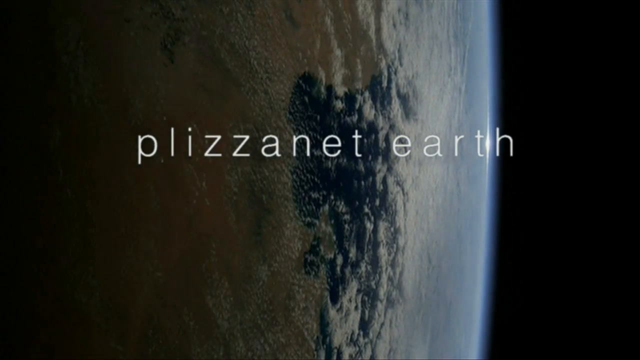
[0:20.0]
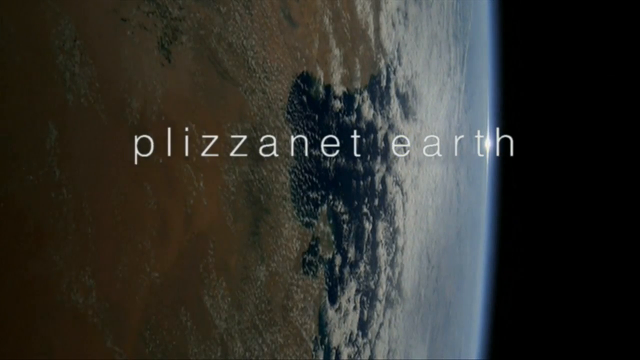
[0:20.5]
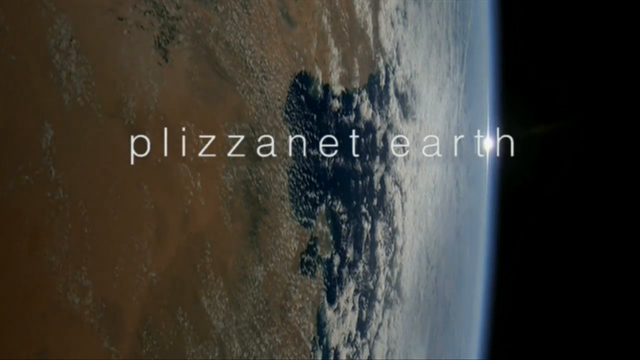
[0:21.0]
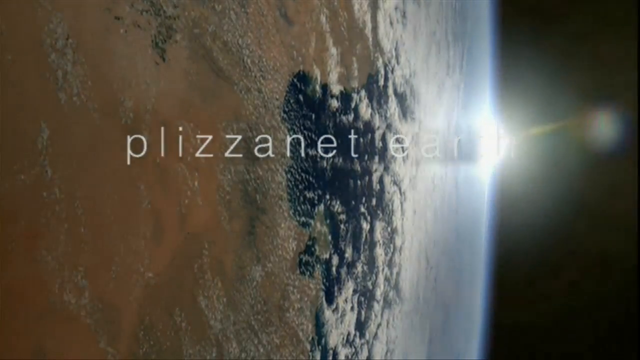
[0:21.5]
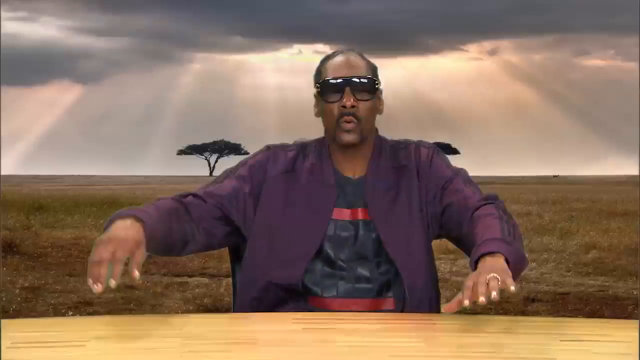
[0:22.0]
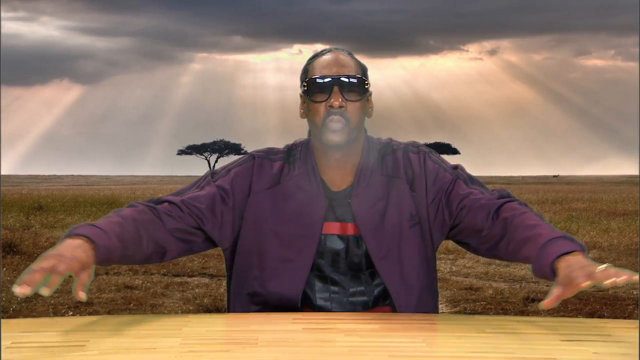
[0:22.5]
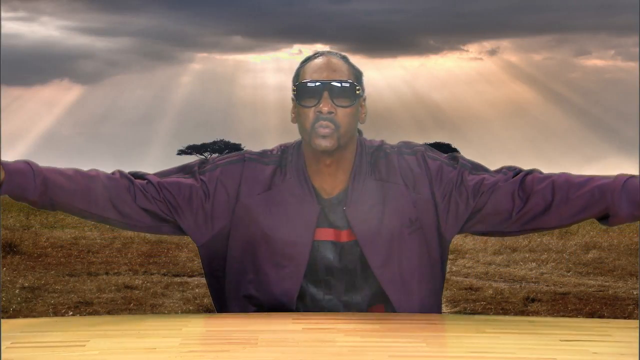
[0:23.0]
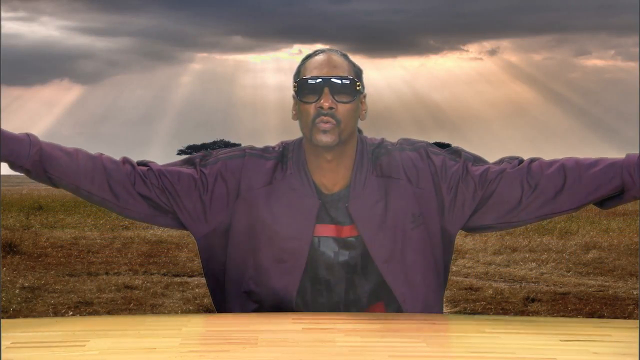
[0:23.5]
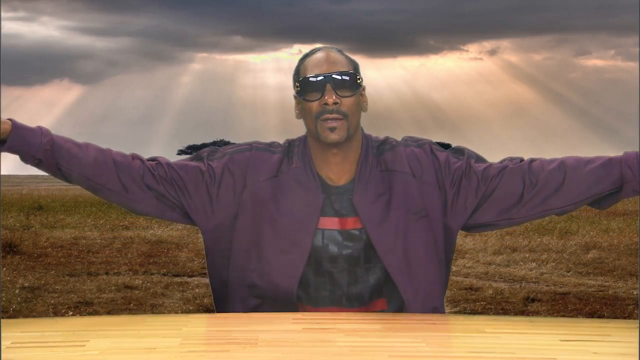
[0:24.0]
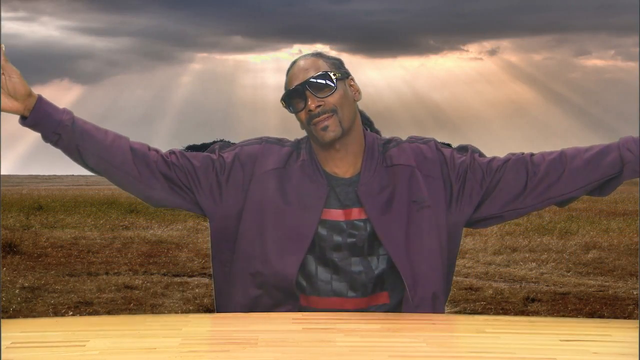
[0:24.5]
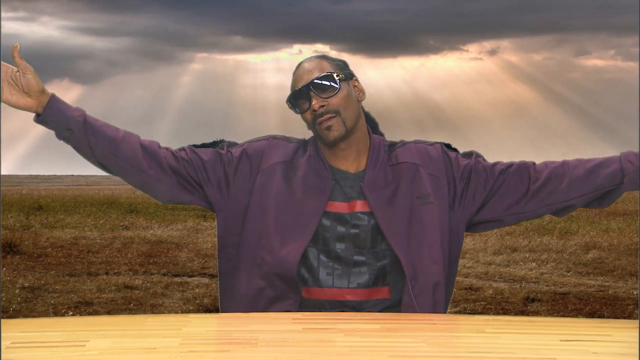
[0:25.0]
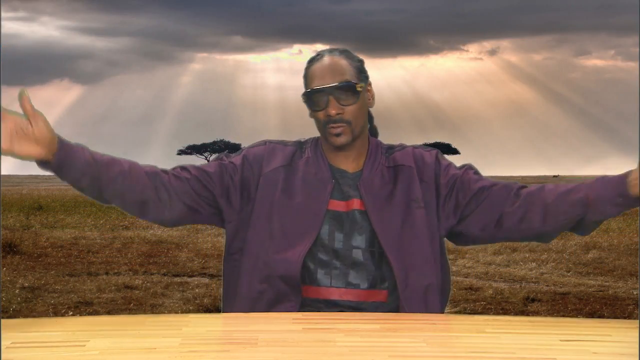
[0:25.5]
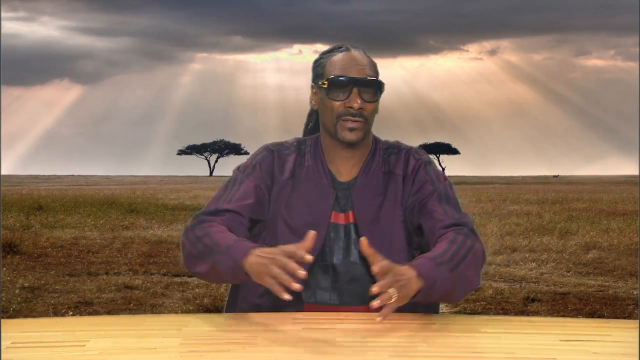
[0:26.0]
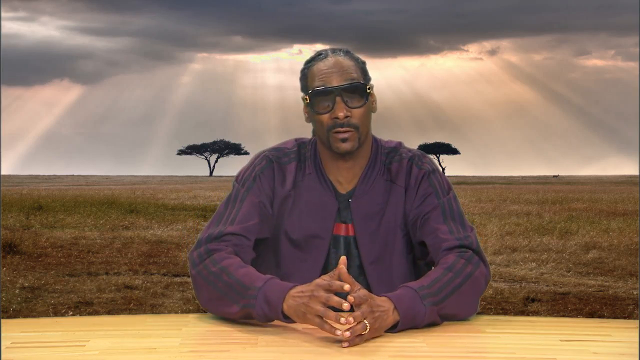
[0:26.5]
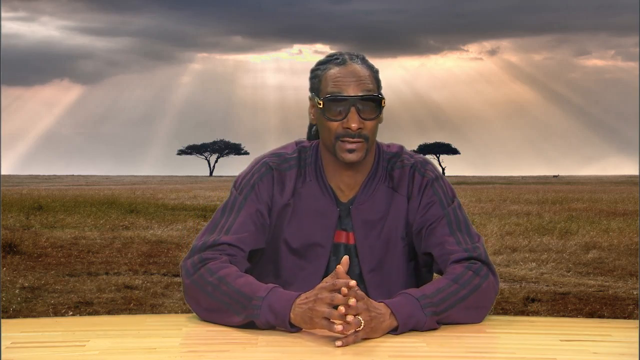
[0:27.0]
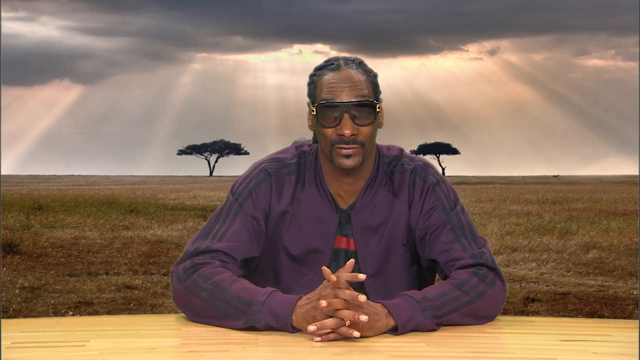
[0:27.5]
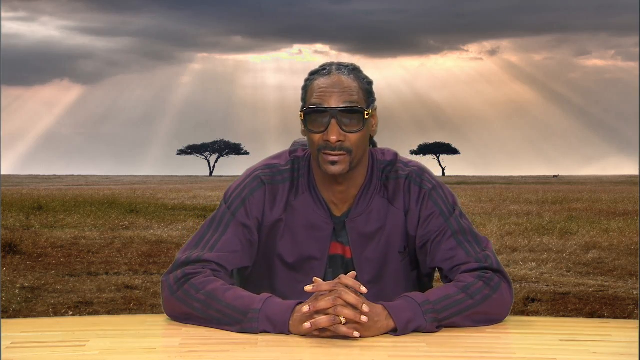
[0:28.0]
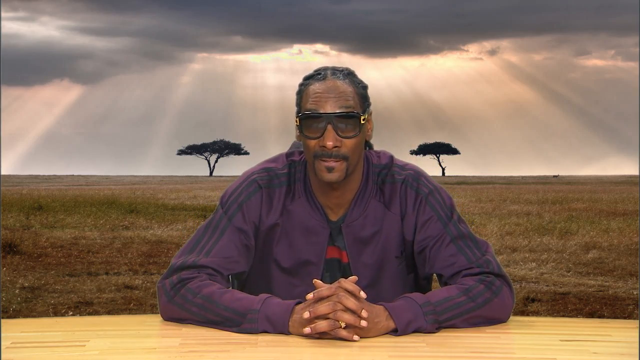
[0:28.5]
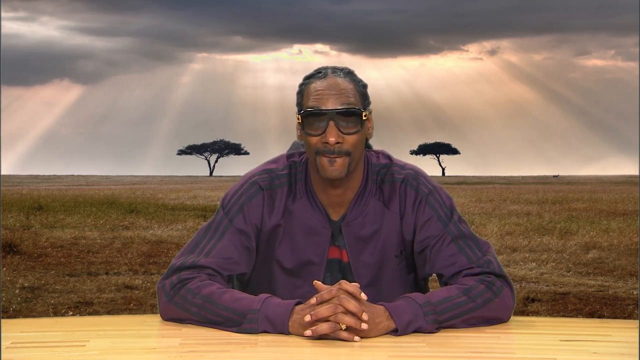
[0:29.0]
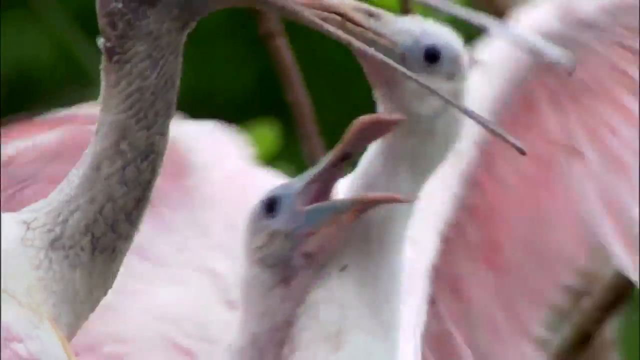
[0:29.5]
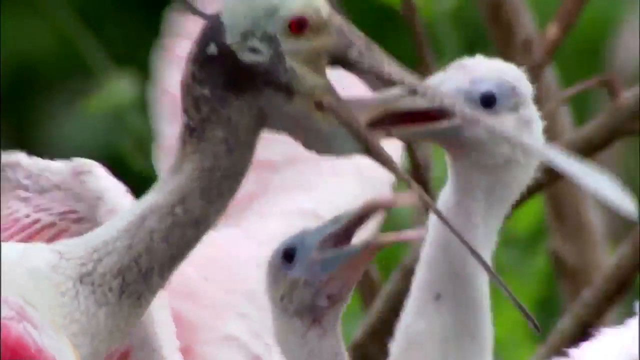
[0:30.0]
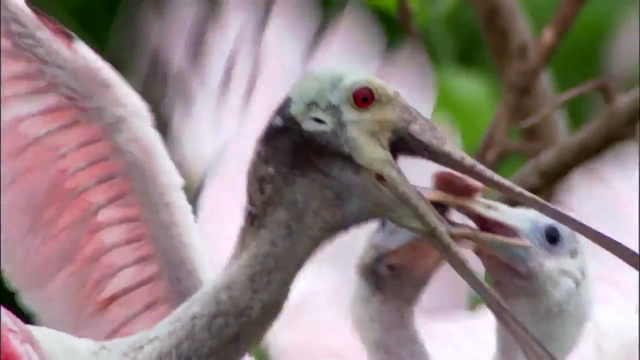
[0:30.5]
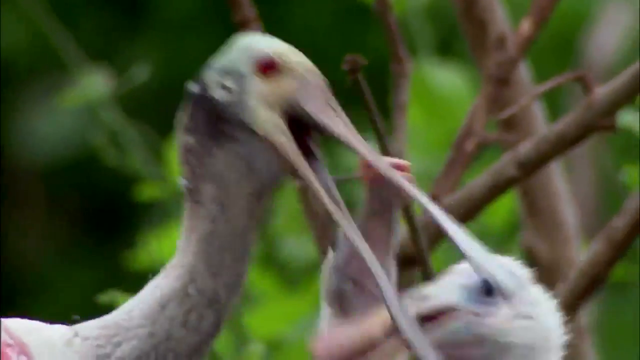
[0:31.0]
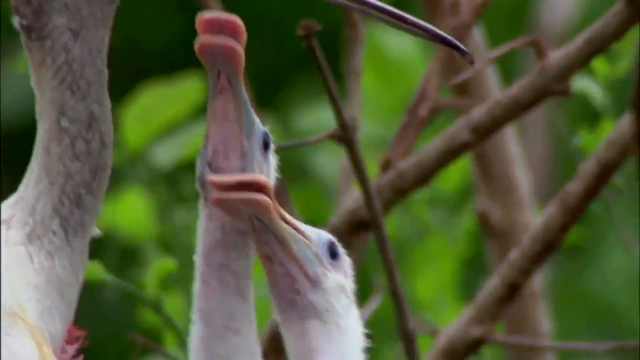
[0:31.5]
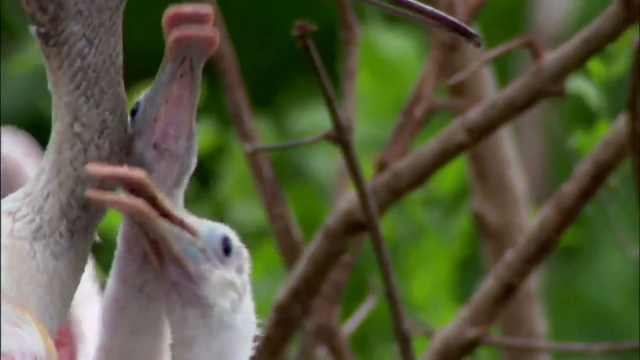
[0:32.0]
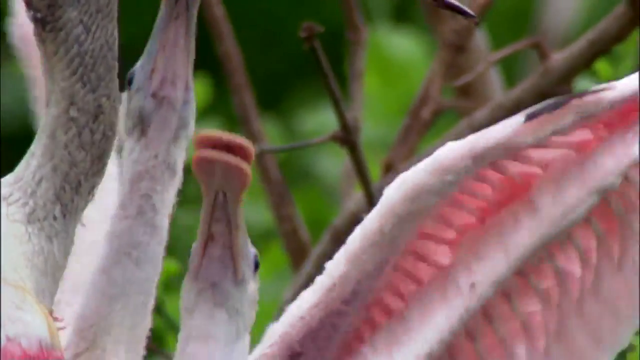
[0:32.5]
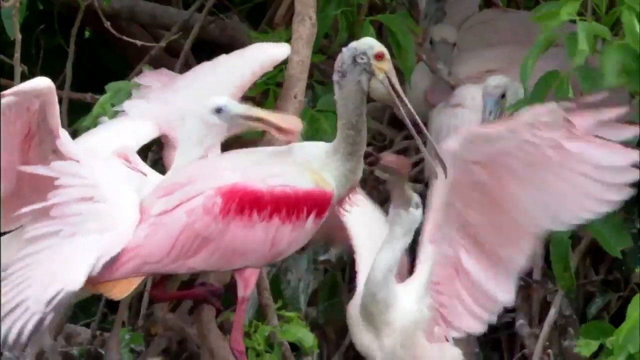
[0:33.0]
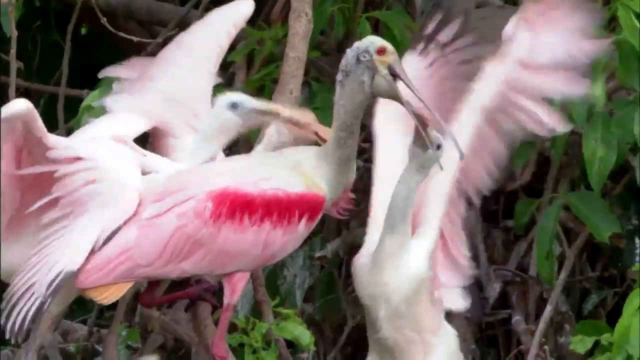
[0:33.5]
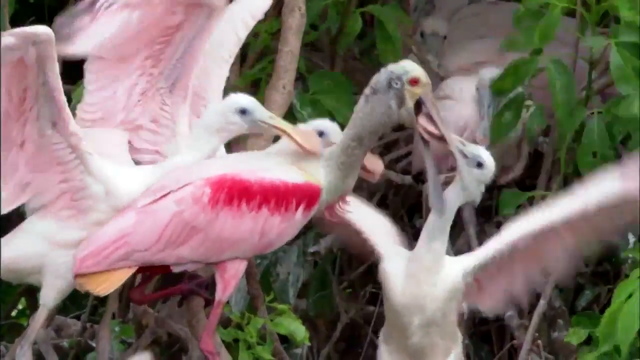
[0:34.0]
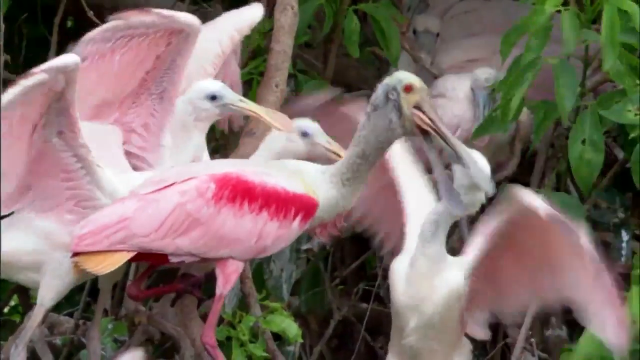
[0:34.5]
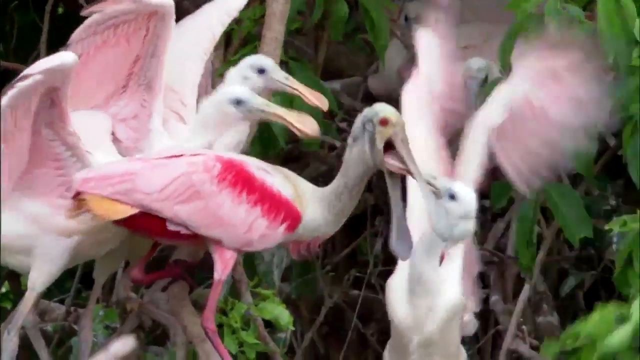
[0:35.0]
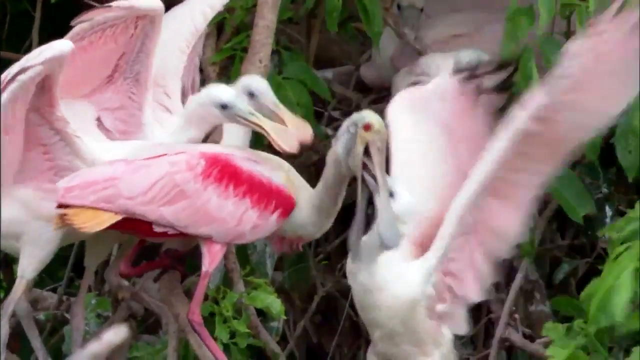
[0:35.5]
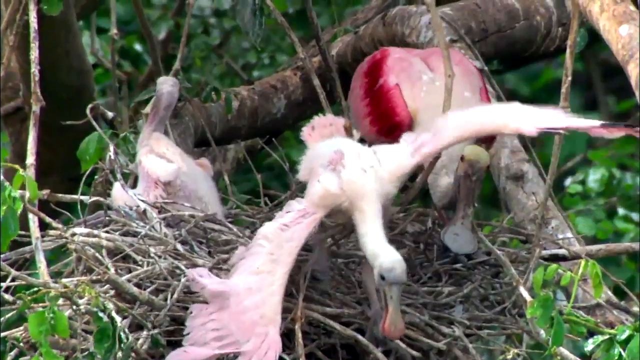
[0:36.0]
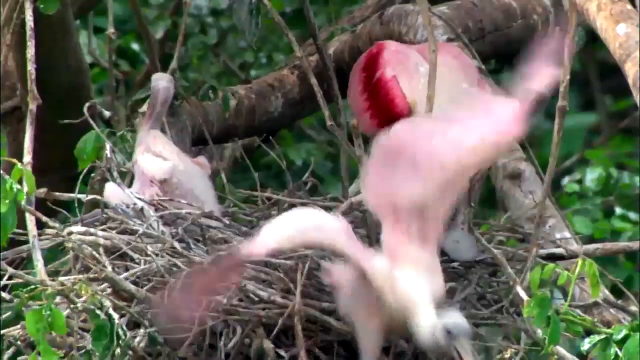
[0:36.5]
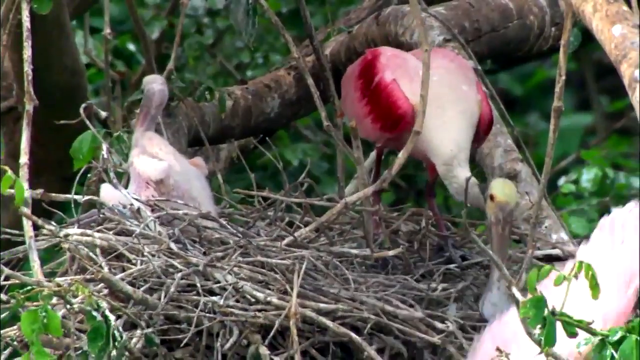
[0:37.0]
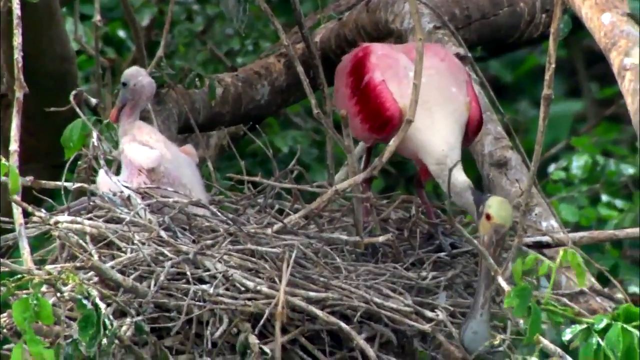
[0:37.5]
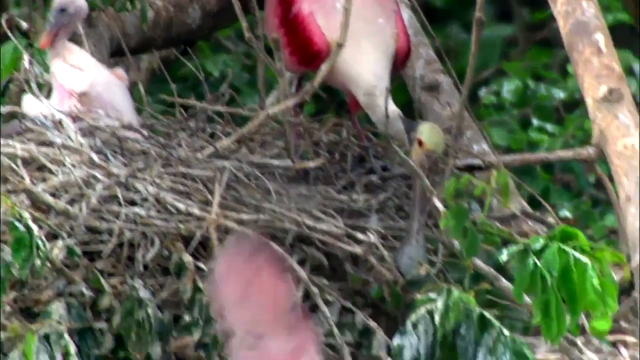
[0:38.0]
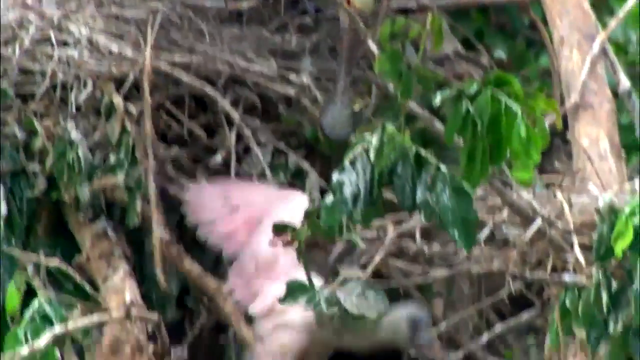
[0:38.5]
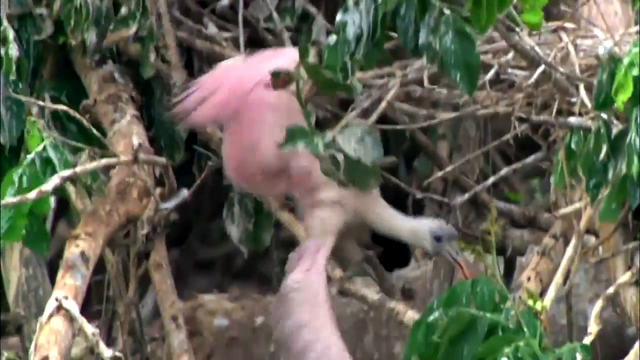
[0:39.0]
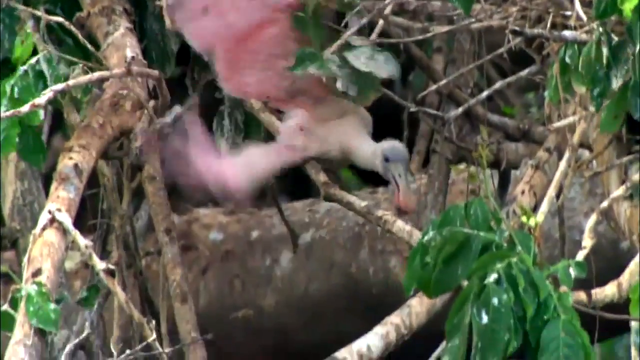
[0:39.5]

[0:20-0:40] A person wearing black sunglasses appears, and behind the person is an open field that seems to be a desert. After that, many birds are shown on their nests. Some of the birds are trying to reach down, and the mother is feeding the baby birds.